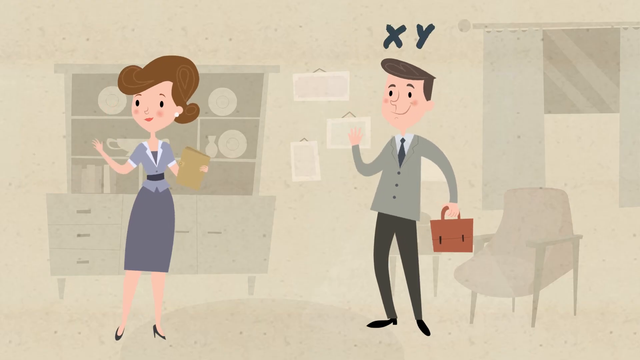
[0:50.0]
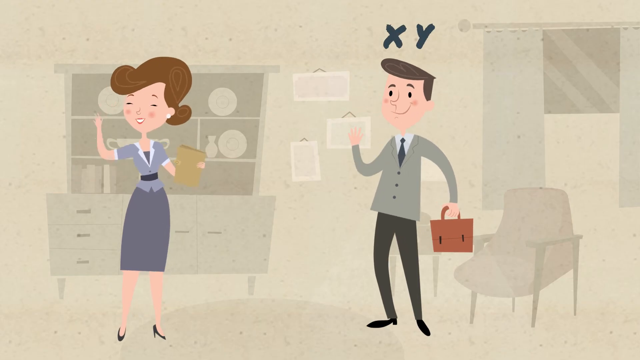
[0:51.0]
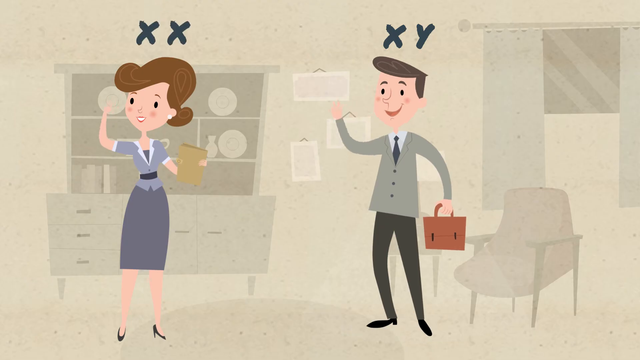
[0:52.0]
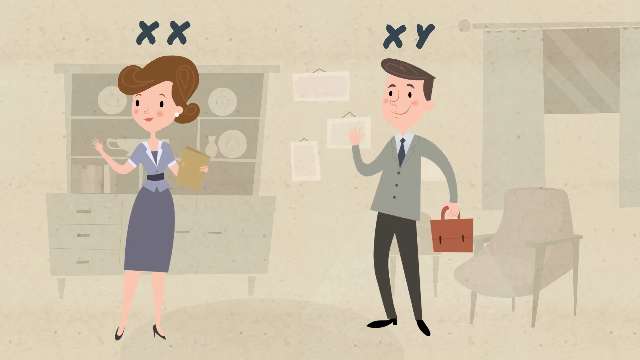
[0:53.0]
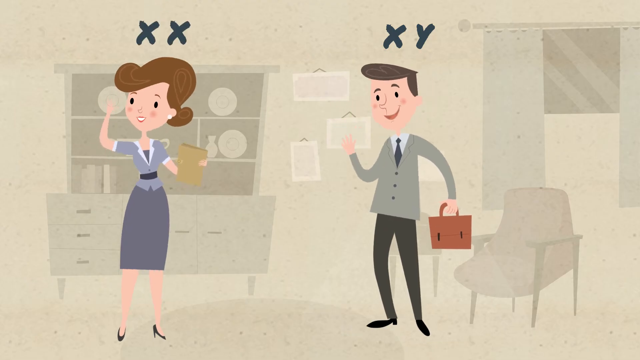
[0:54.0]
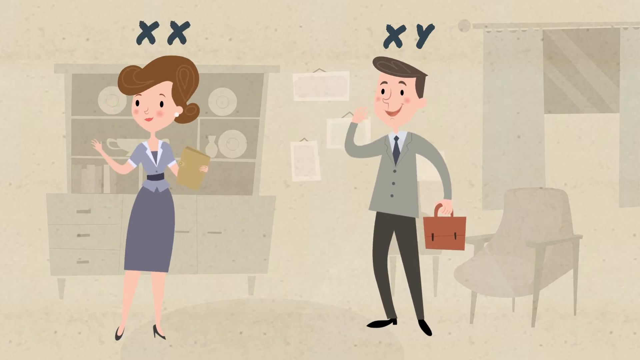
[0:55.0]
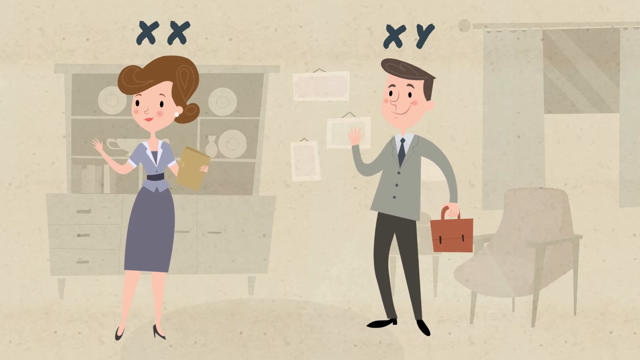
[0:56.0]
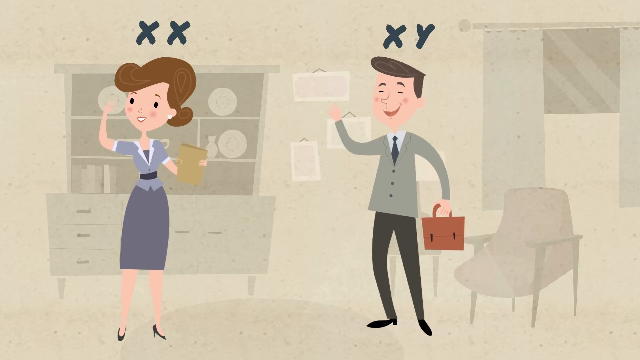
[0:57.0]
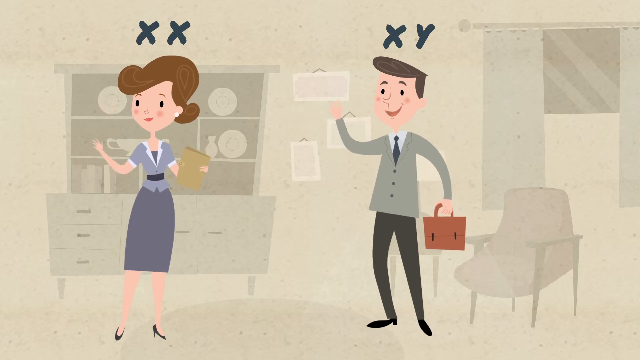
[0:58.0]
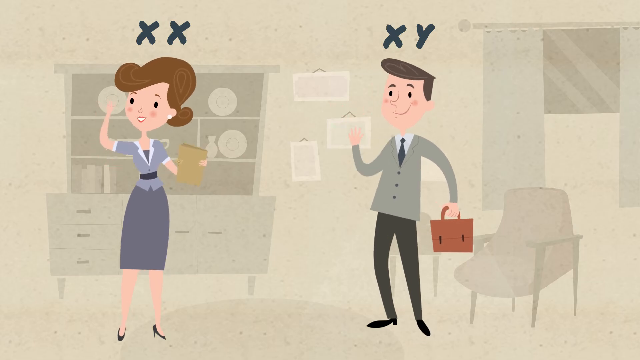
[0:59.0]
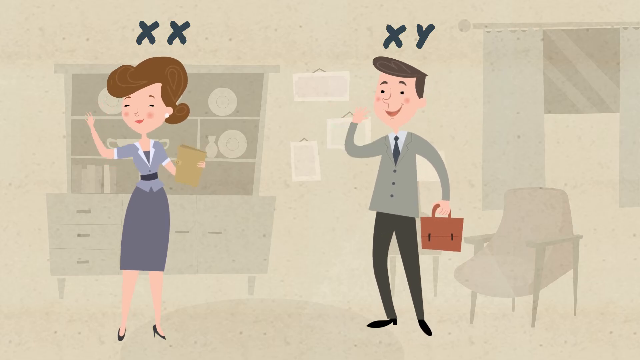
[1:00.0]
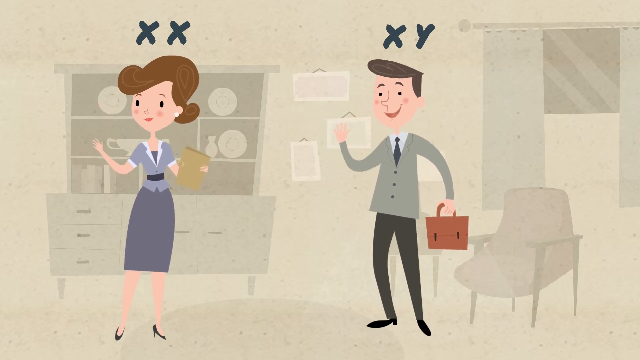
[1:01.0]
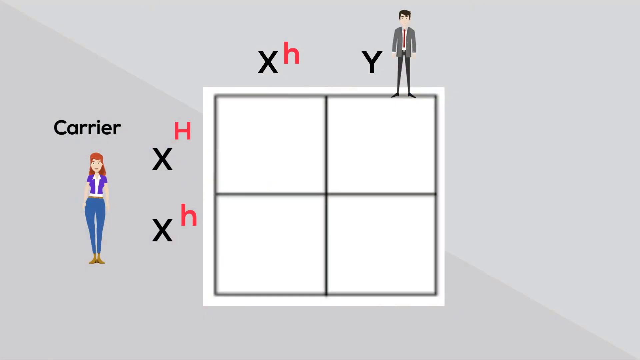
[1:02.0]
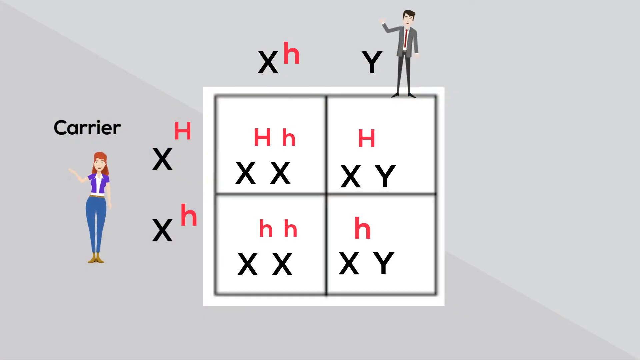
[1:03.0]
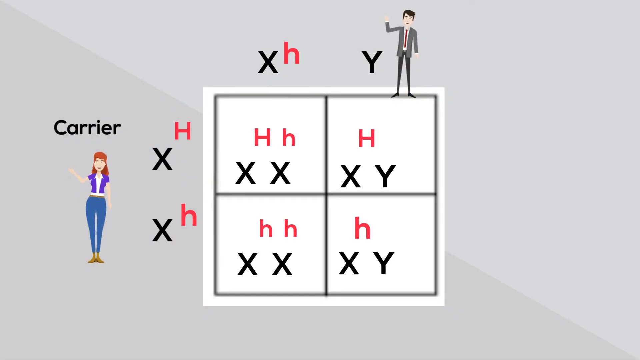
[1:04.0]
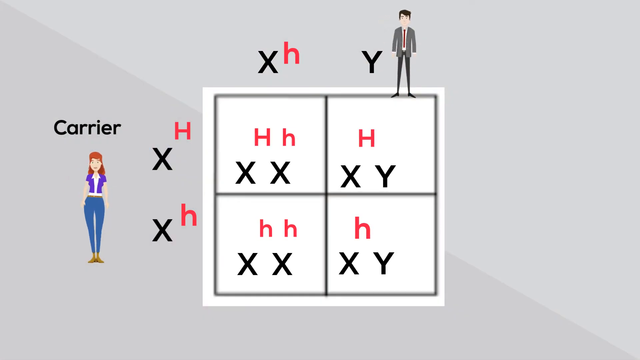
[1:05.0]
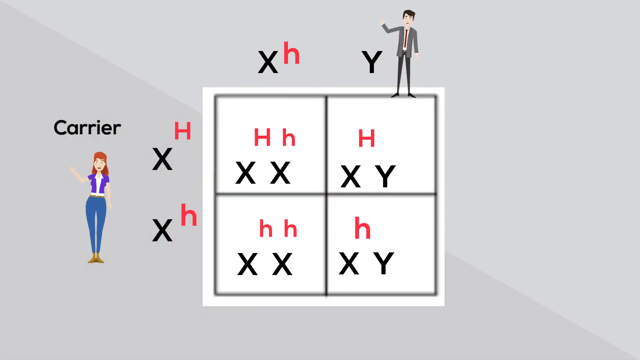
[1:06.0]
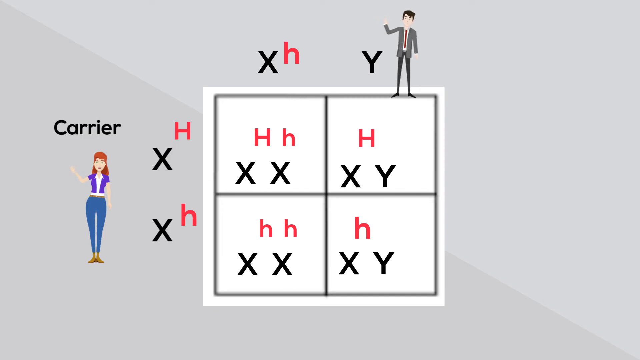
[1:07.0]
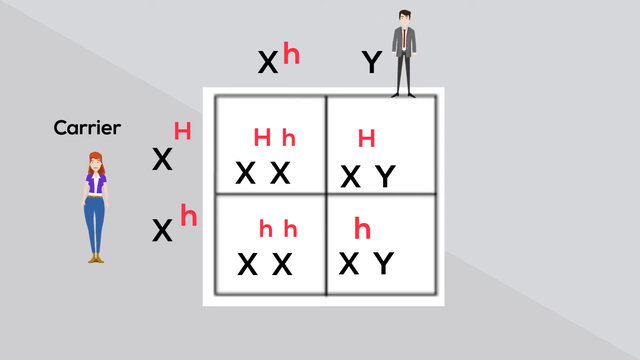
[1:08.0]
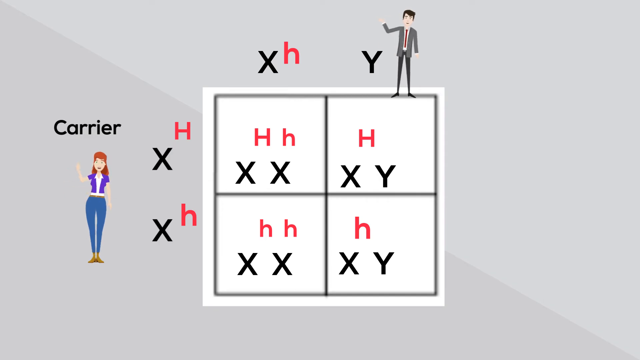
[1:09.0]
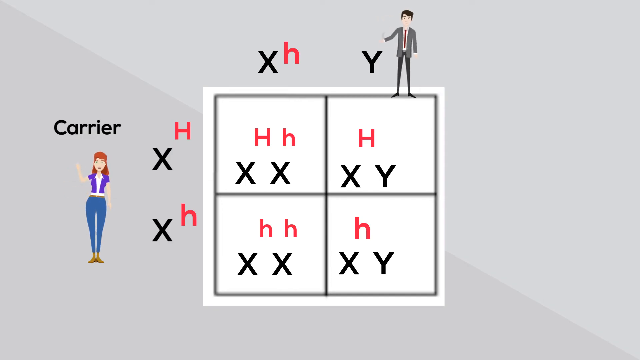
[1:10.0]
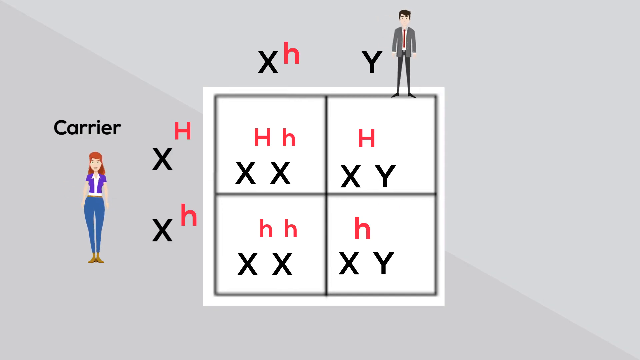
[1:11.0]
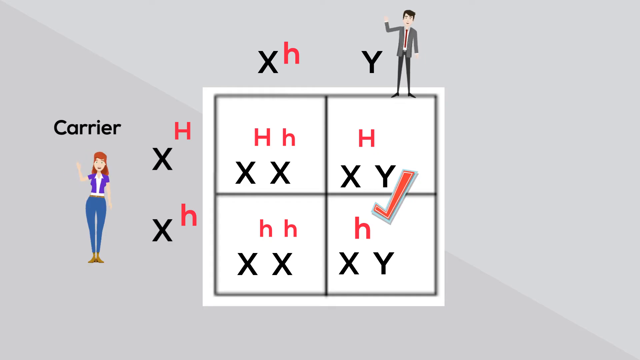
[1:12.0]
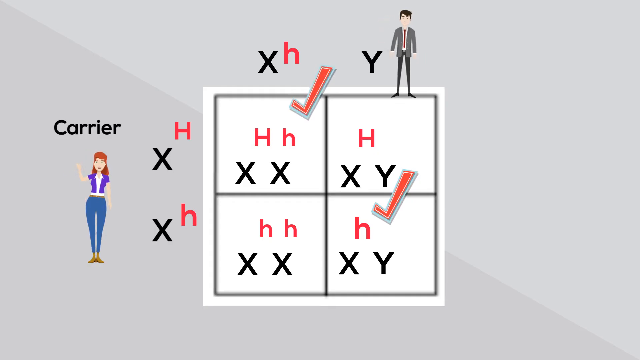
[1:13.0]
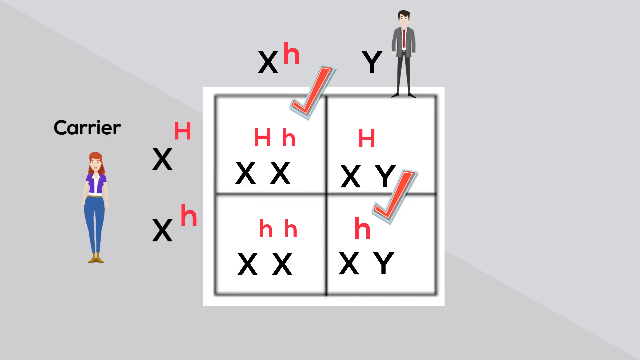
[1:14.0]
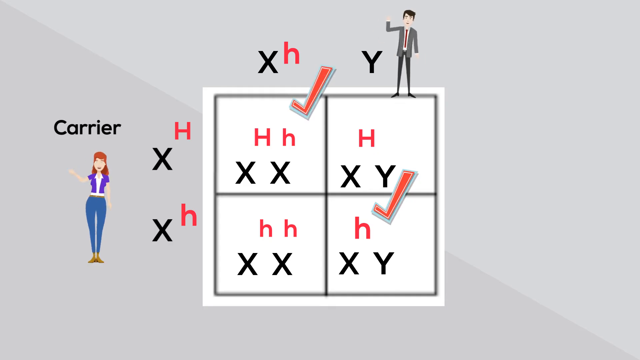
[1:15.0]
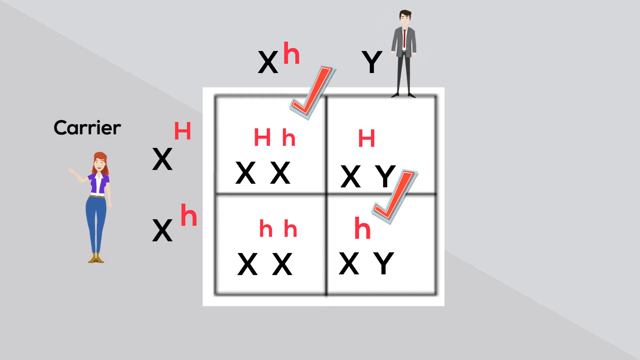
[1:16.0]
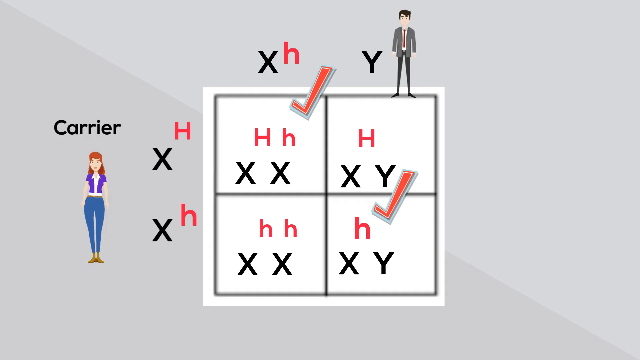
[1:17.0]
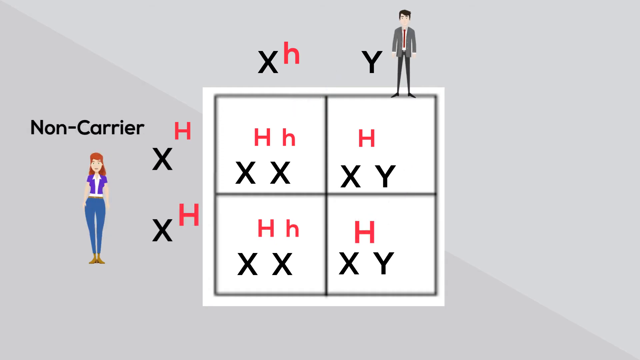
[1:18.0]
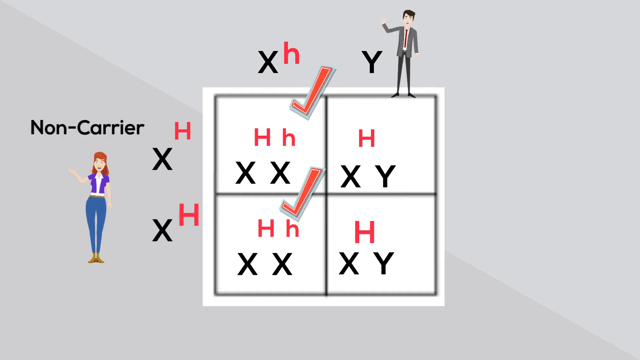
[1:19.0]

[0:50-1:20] An animated male in a gray shirt walks with a round object in his left hand, the letters "X, Y" above his head. His right arm is up and waving, and he looks toward the left side of the screen. A female is on the left side of the screen, about one inch from the edge, turned slightly to her right, toward the left of the screen. Her right arm is up and her hand waves, while in her left hand, bent at the elbow, she holds a small tan rectangular object. Her brown hair is in two X's over her head, and she wears a grayish-blue top lined in white and a darker blue skirt, with a very thin waist. Behind them the backdrop has very light pale areas and a tan area; at the upper right corner of the tan area is a black box that is dark on each side, with gray objects hanging down. Next comes a four-square box.